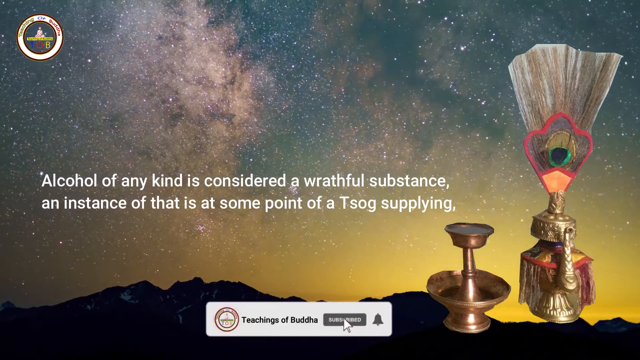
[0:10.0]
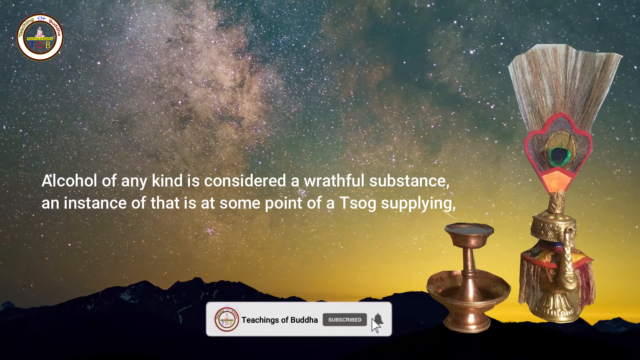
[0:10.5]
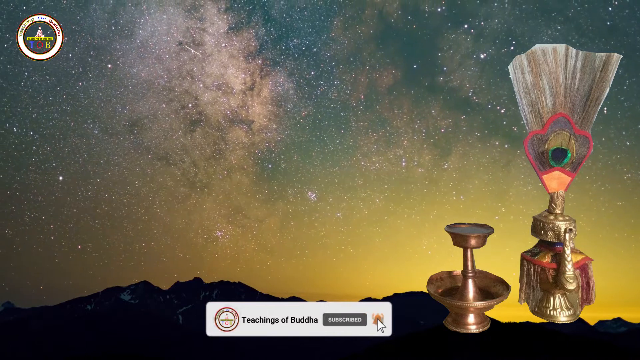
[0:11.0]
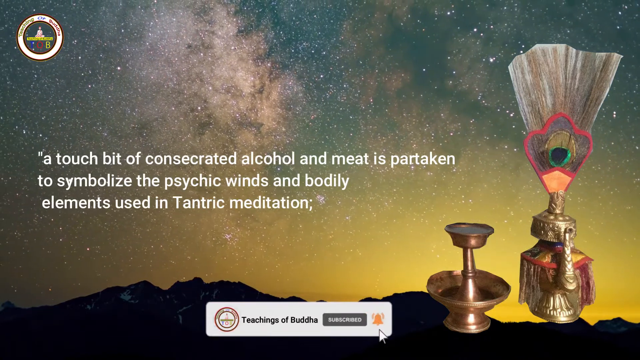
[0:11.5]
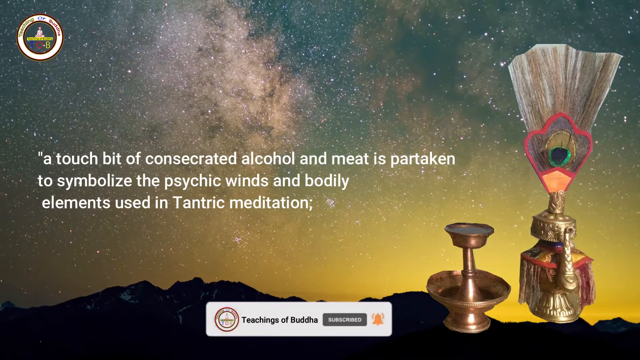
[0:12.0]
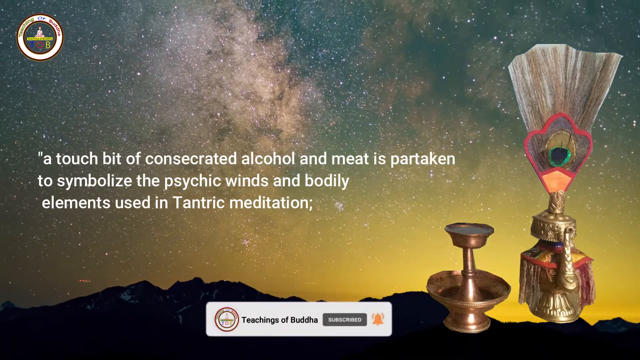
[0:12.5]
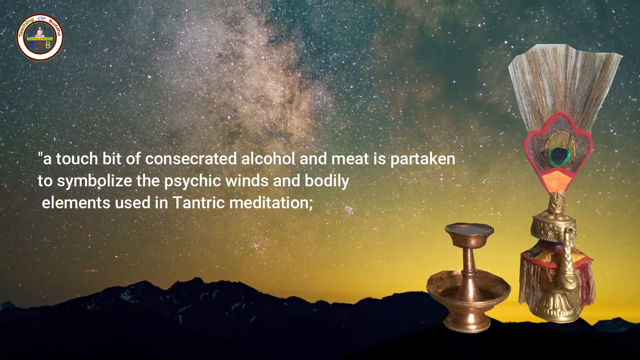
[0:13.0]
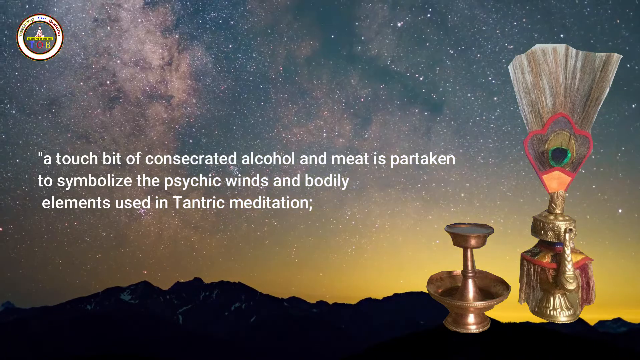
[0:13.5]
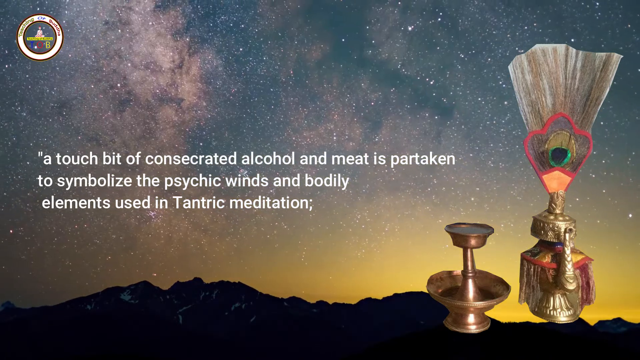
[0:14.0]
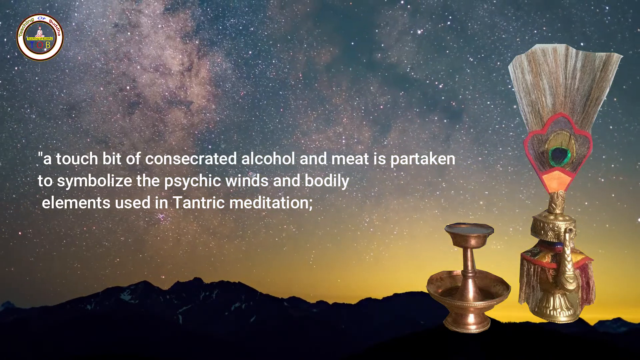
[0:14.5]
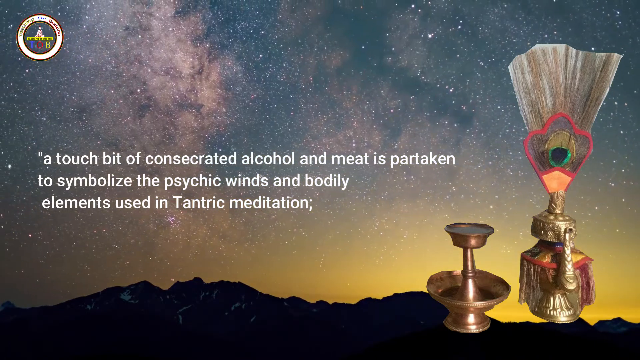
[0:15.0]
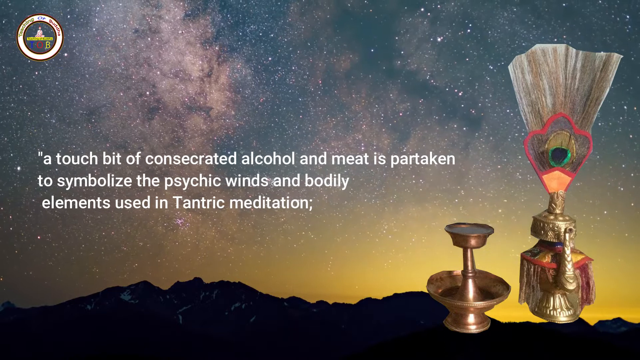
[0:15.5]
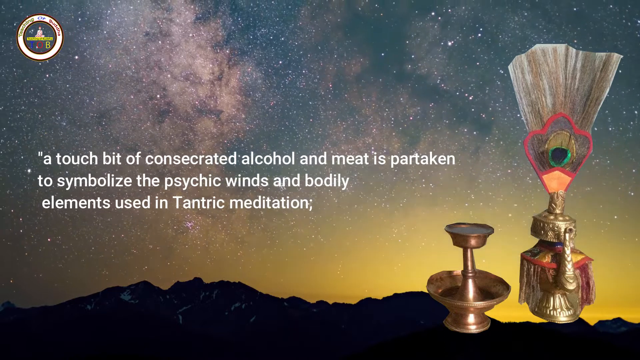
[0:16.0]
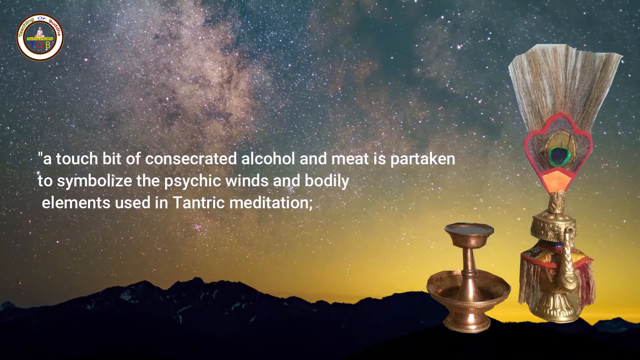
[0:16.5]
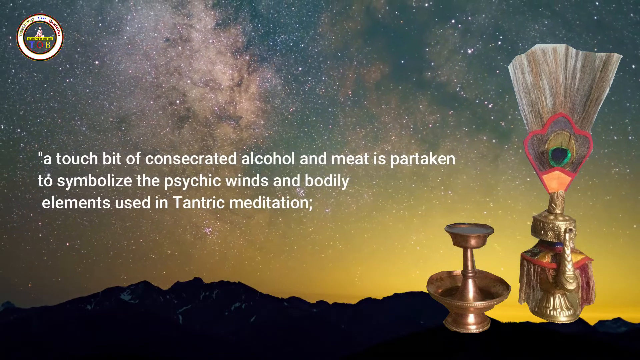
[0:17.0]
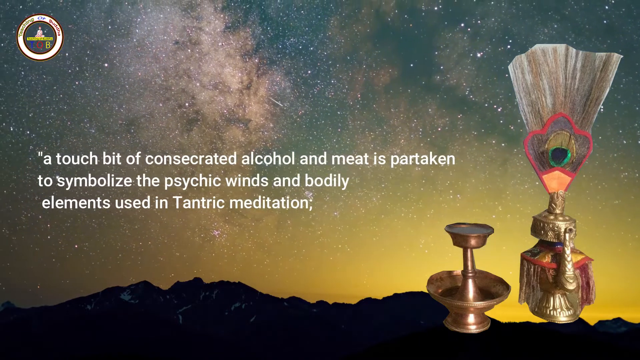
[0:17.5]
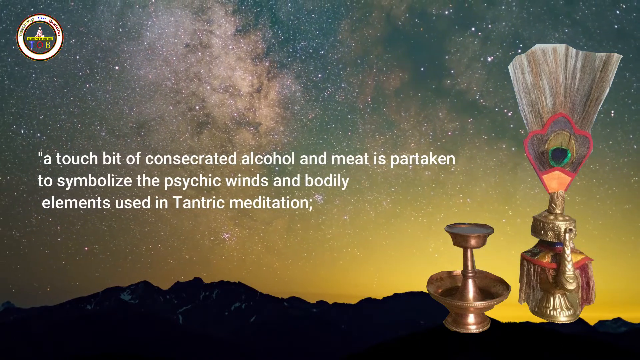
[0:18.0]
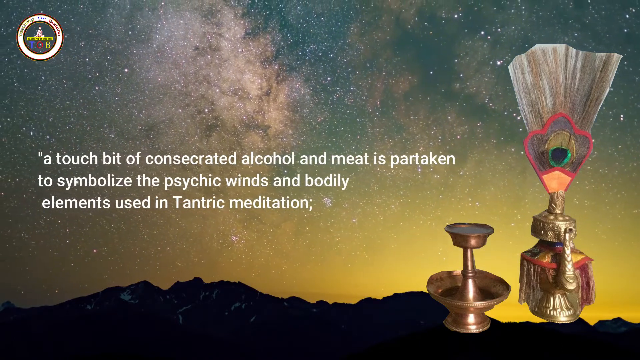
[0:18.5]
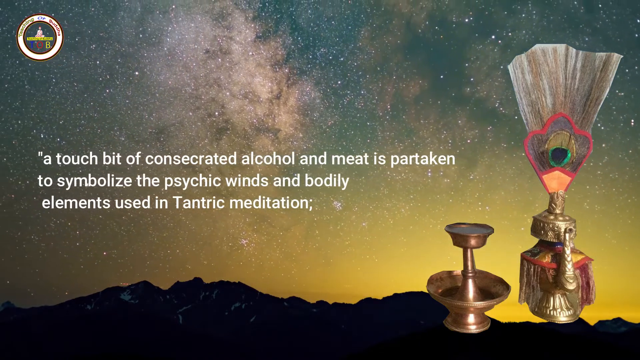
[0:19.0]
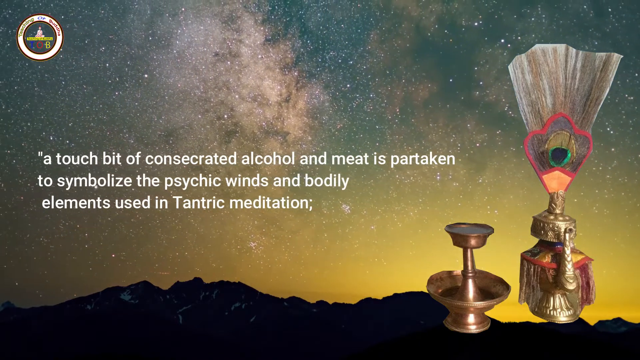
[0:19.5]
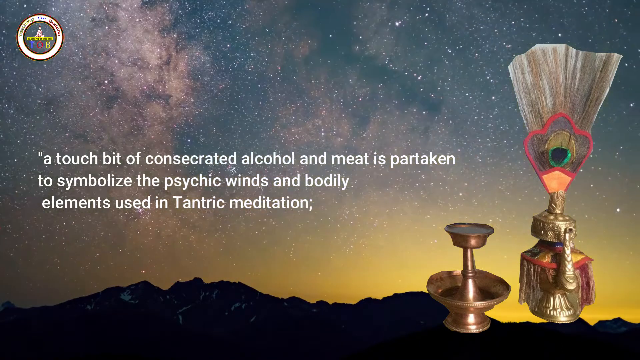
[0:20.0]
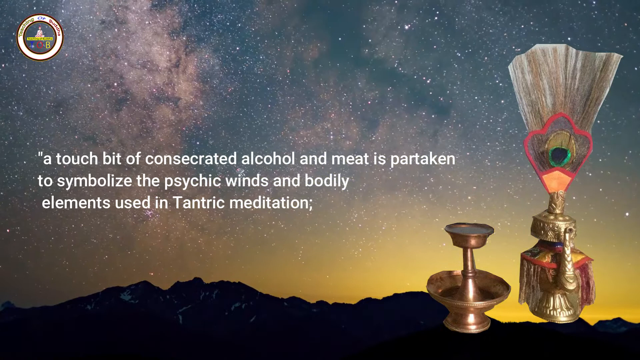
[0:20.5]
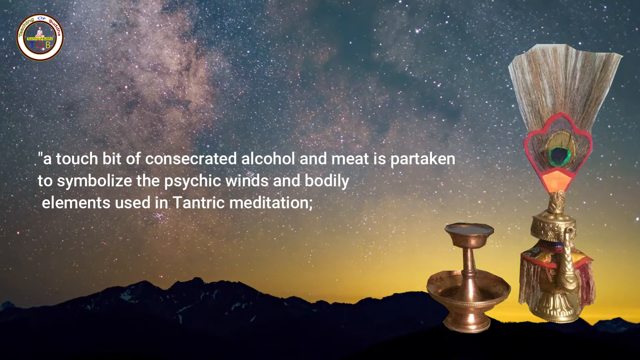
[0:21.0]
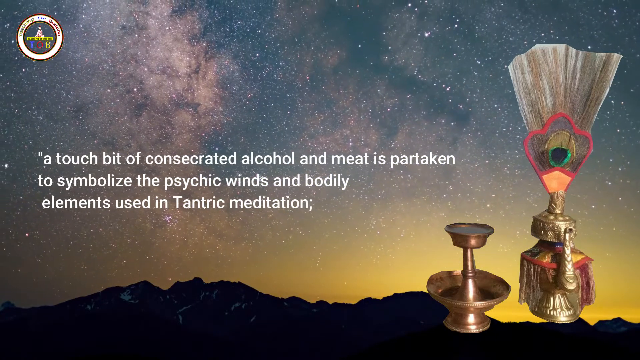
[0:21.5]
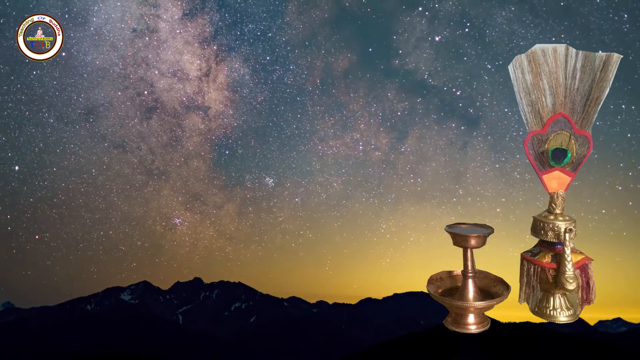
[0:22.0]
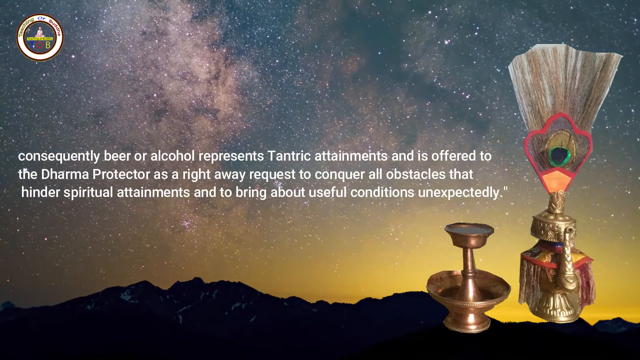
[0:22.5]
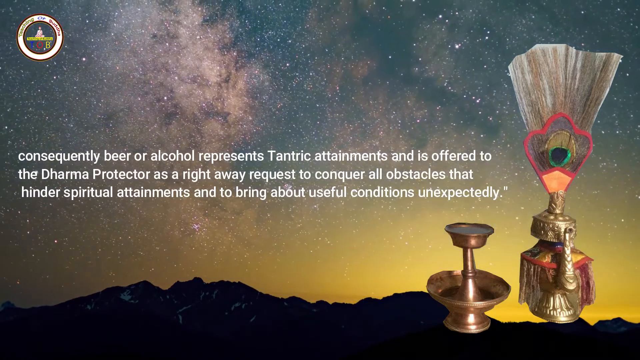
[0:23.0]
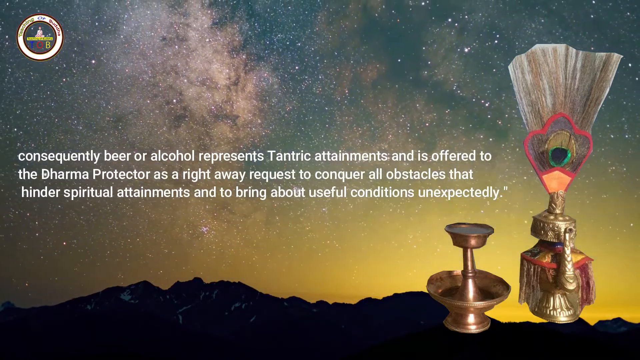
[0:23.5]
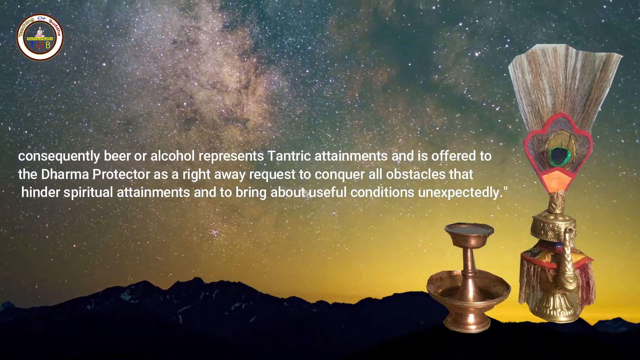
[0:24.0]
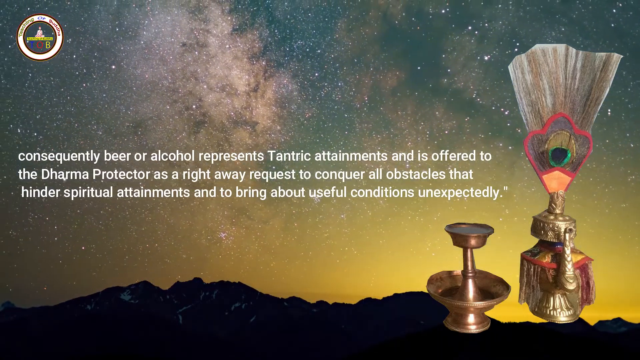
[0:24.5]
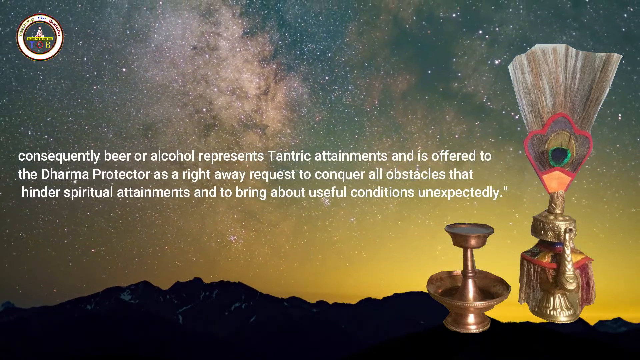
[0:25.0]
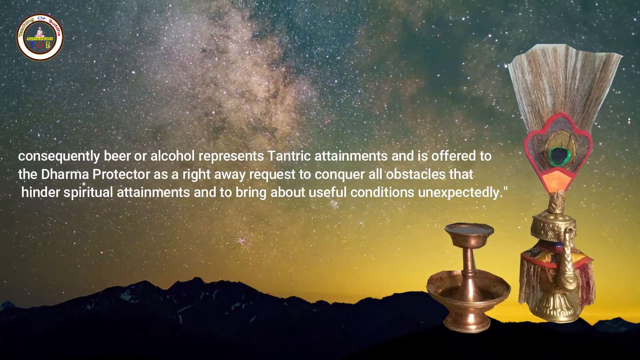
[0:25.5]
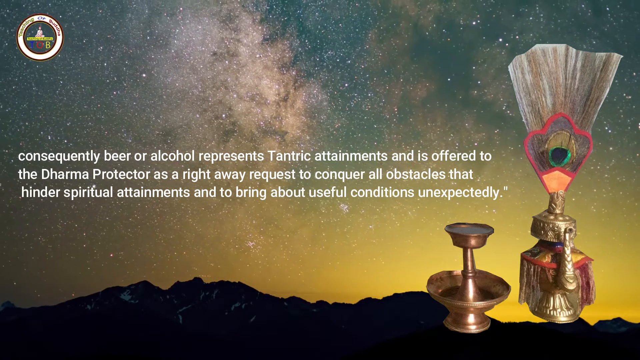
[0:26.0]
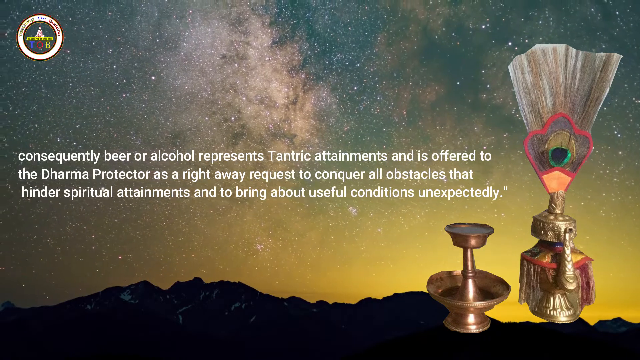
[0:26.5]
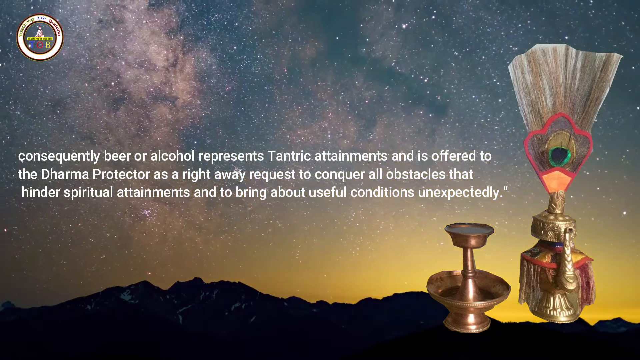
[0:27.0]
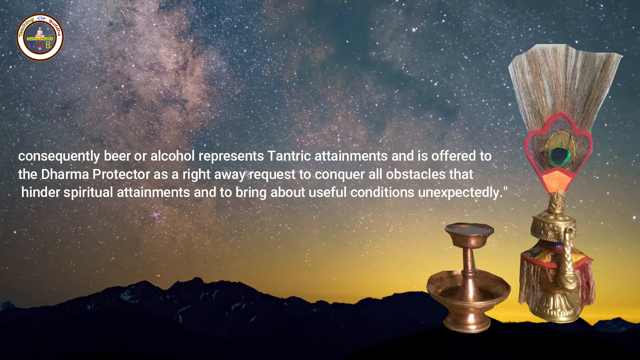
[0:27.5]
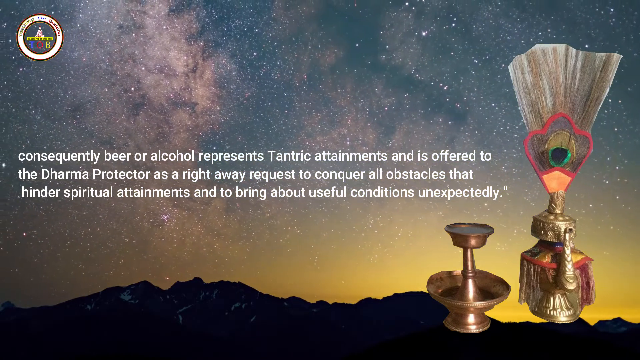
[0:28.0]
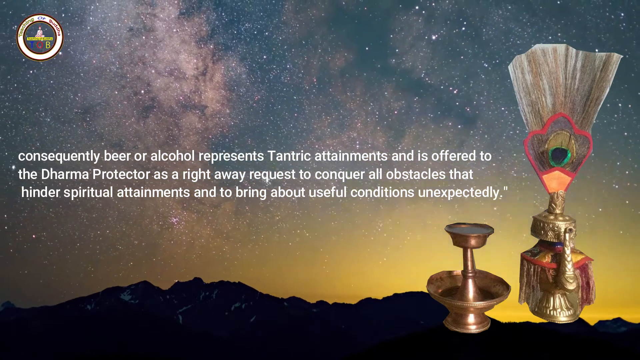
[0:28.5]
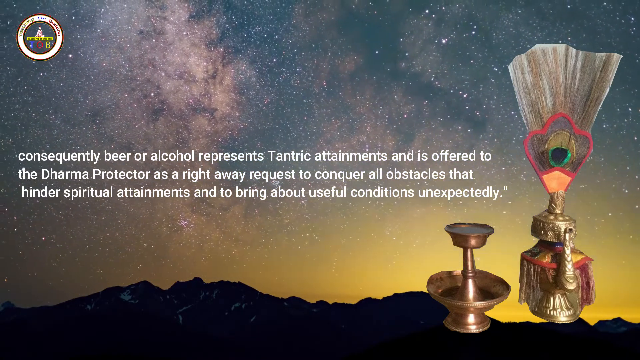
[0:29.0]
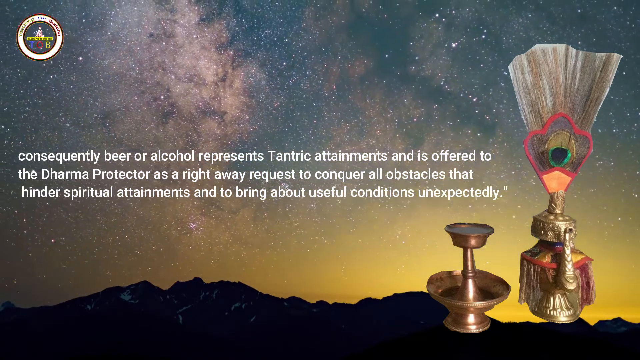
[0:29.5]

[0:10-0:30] A pop-up appears at the bottom center with the text "teachings of Buddha", a gray subscribe button, an alert or bell icon, and the seal for teachings of Buddha. Meanwhile the night sky keeps spinning or moving slowly. The text changes to "a touch bit of consecrated alcohol and meat is partaken to symbolize the psychic winds and bodily elements used in tantric meditation." It then reads "Consequently, beer or alcohol represents tantric attainments and is offered to the Dharma Protector," continuing "to conquer all obstacles that hinder spiritual attainments and to bring about useful conditions unexpectedly." The sky continues to move, and at times, especially around the horizon, the color shifts somewhat to yellow, with a yellow glow over the mountains. The two artifacts on the bottom right side remain static.